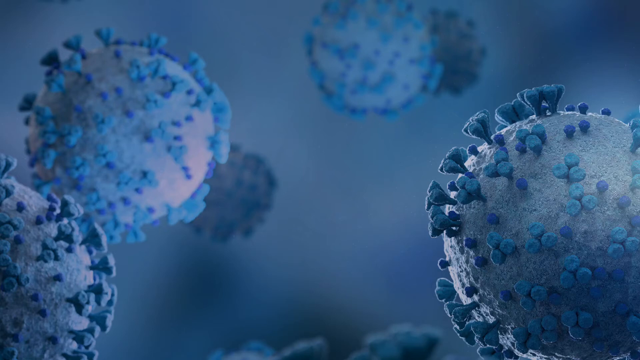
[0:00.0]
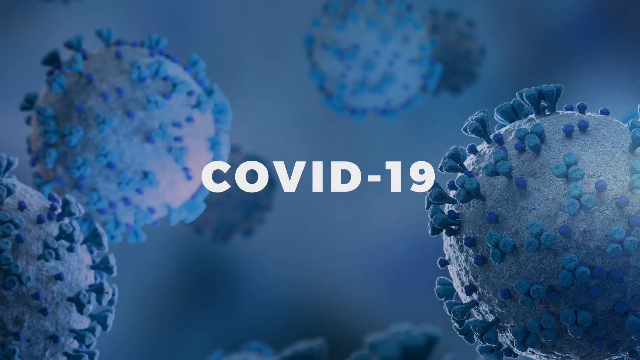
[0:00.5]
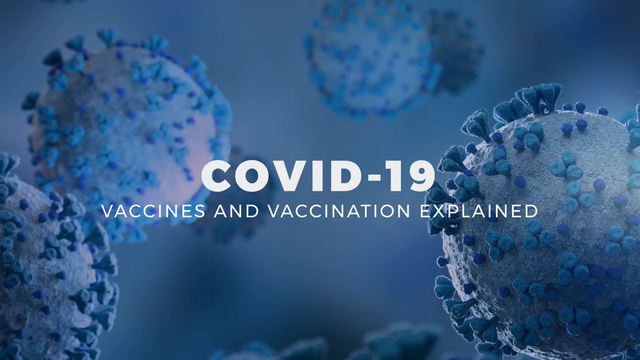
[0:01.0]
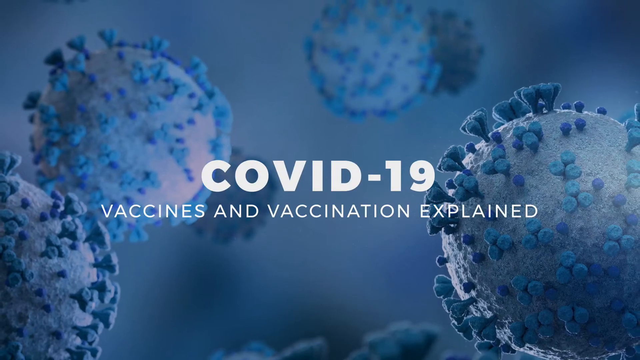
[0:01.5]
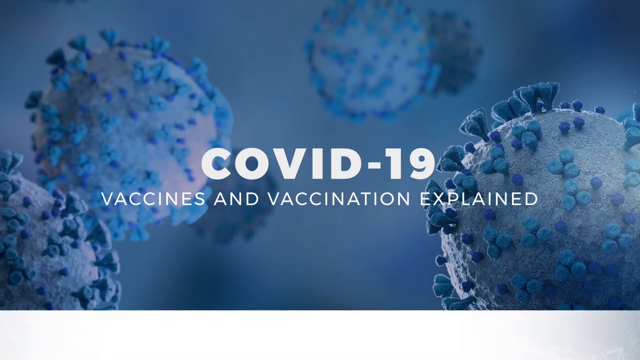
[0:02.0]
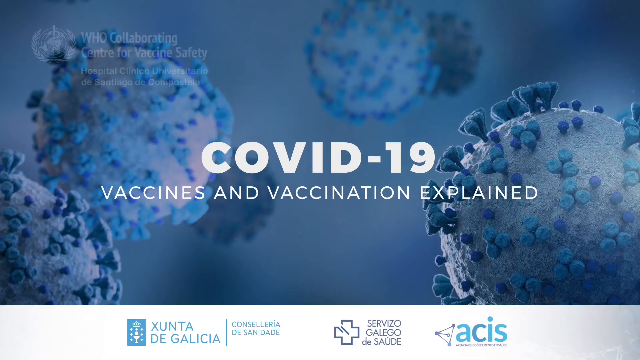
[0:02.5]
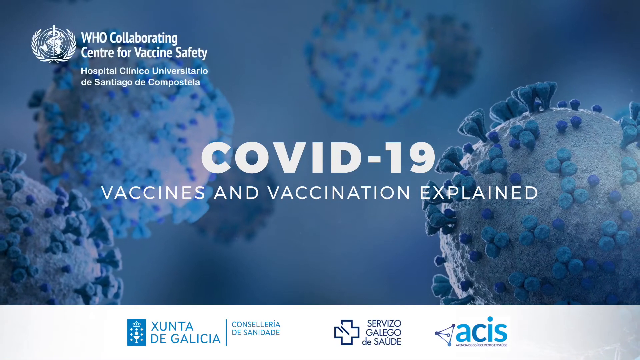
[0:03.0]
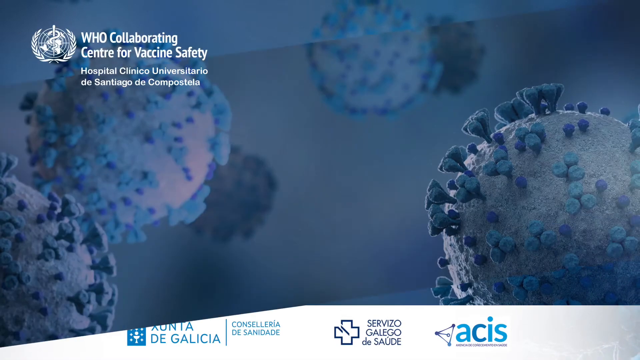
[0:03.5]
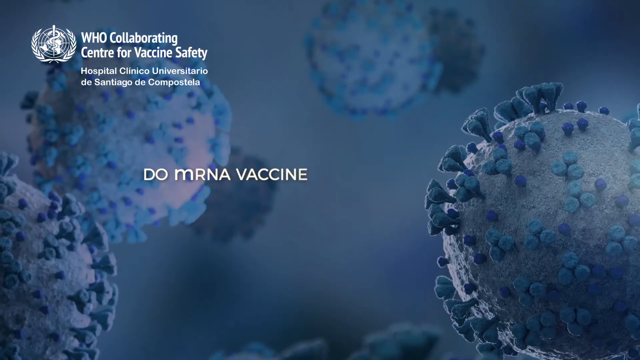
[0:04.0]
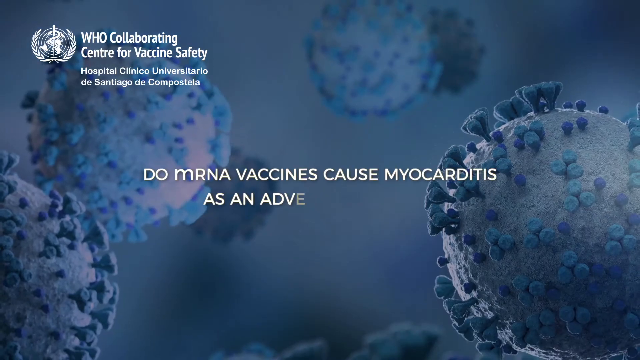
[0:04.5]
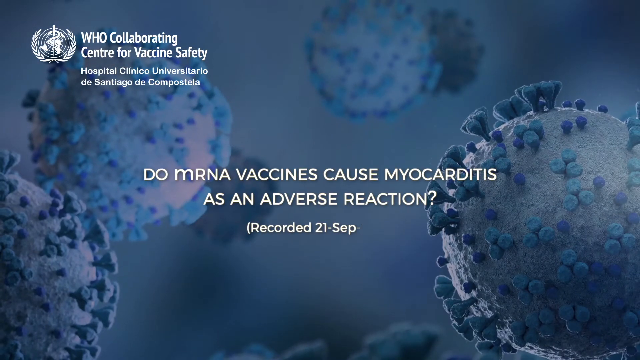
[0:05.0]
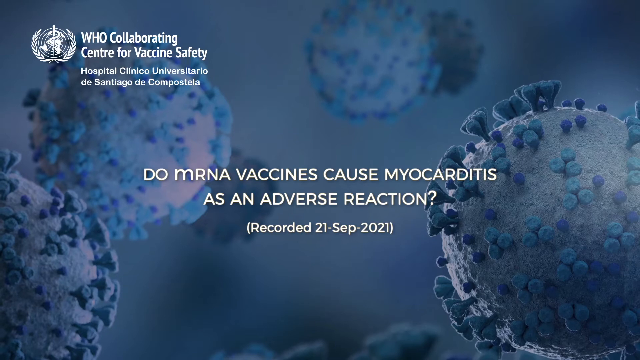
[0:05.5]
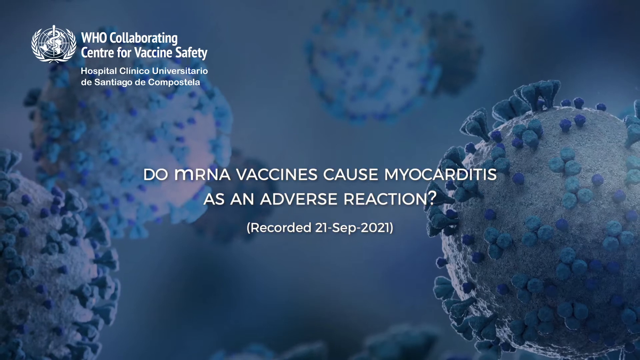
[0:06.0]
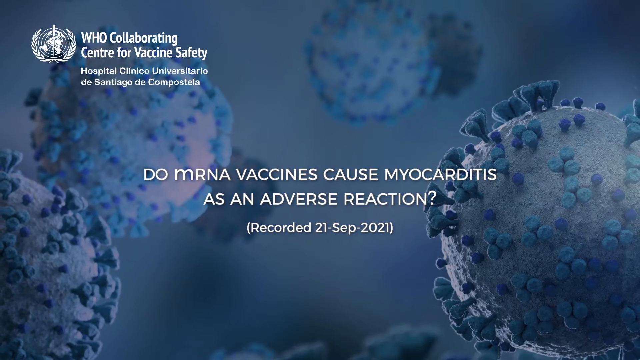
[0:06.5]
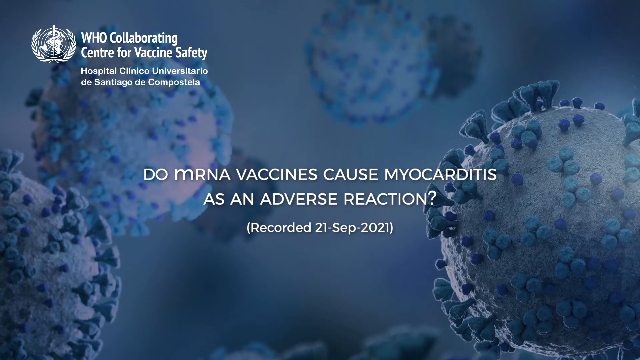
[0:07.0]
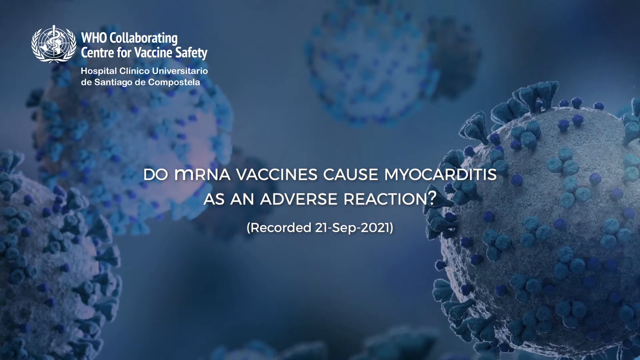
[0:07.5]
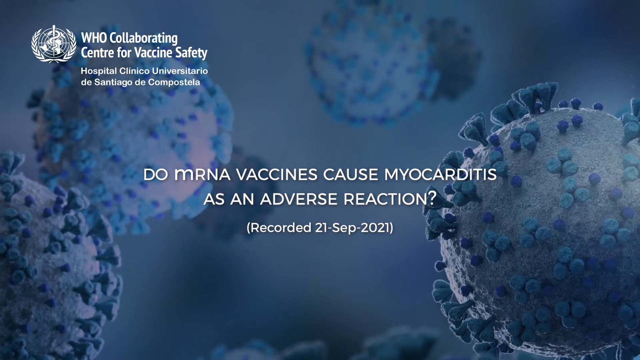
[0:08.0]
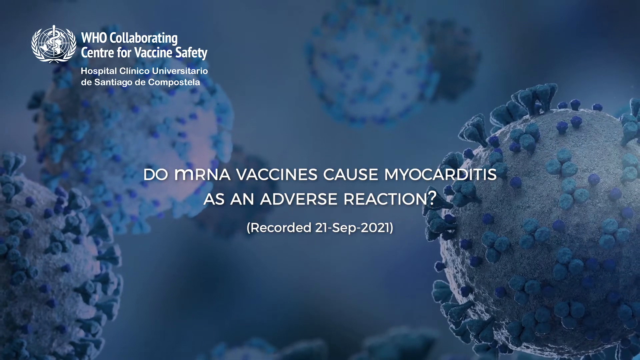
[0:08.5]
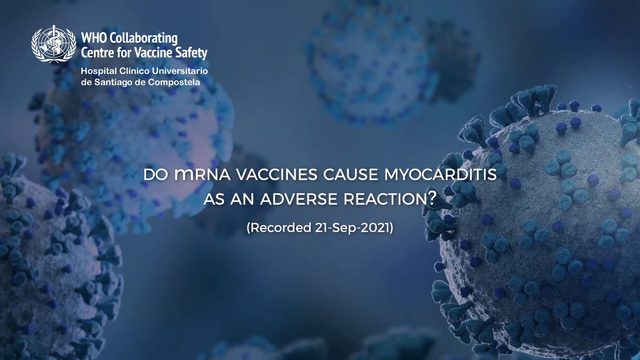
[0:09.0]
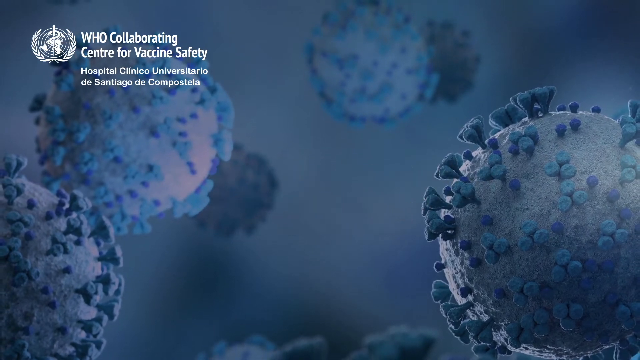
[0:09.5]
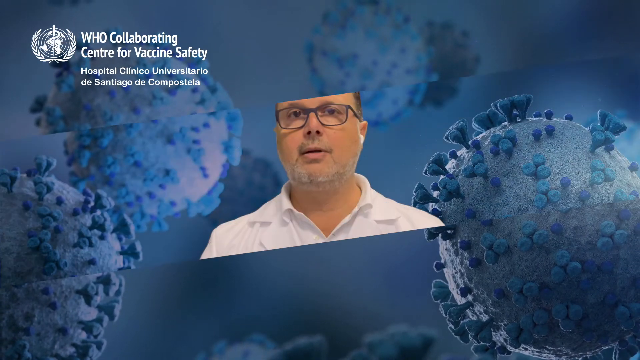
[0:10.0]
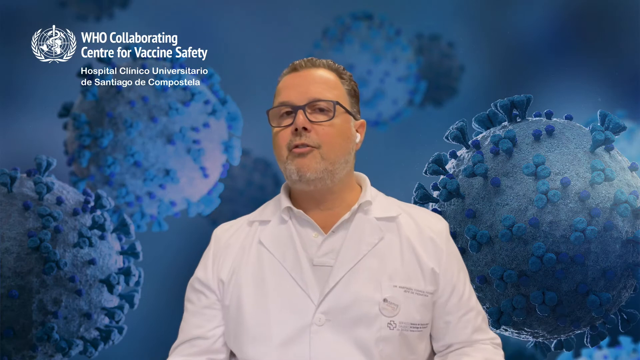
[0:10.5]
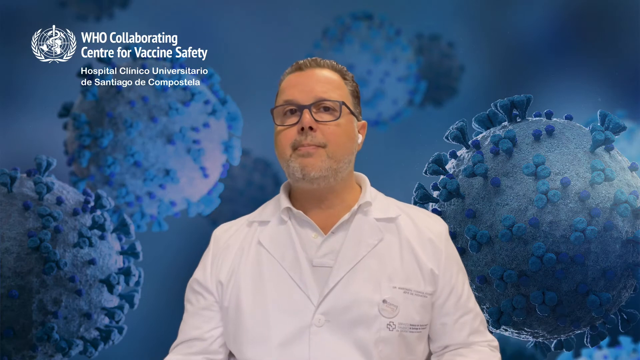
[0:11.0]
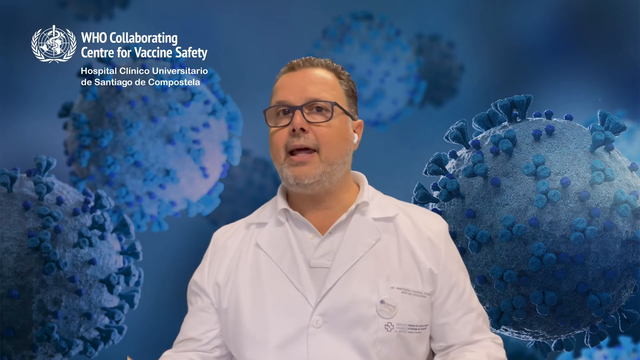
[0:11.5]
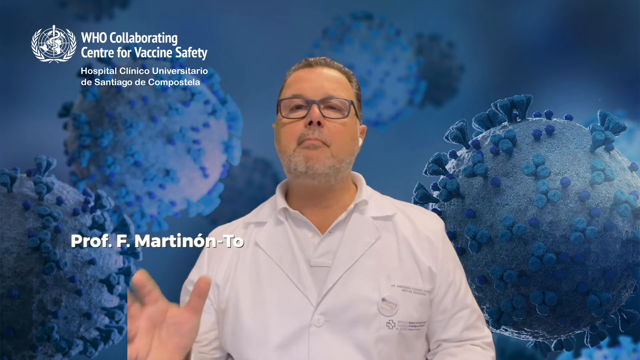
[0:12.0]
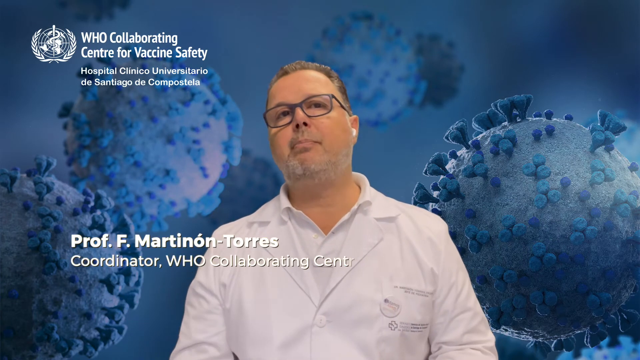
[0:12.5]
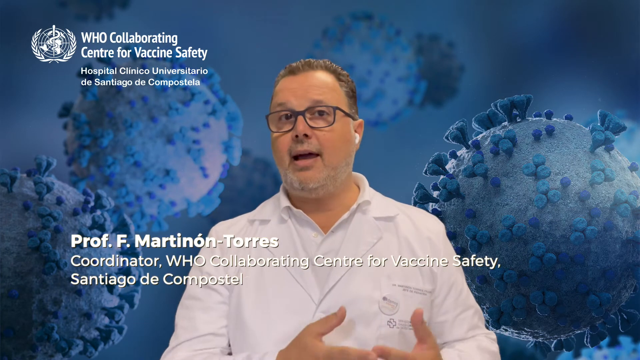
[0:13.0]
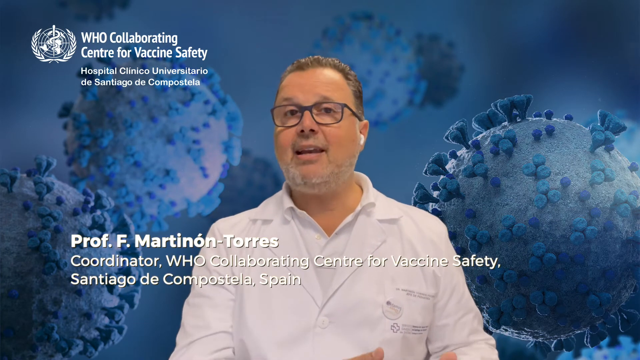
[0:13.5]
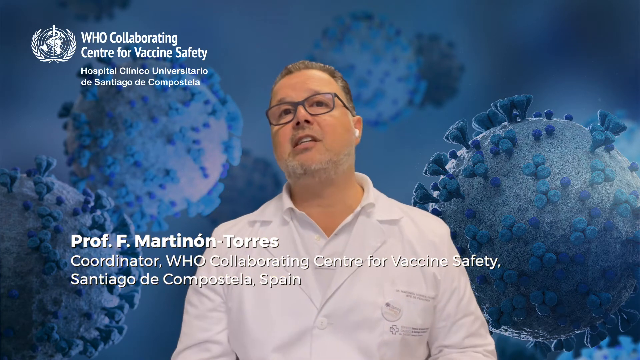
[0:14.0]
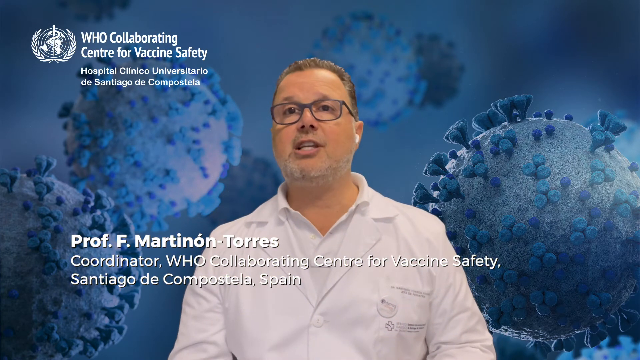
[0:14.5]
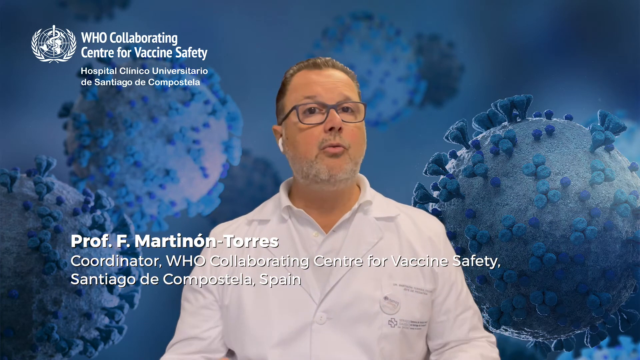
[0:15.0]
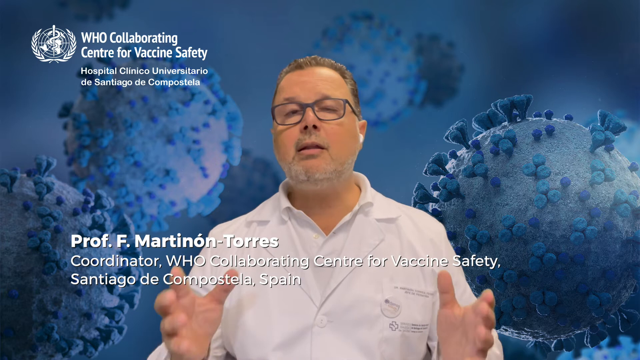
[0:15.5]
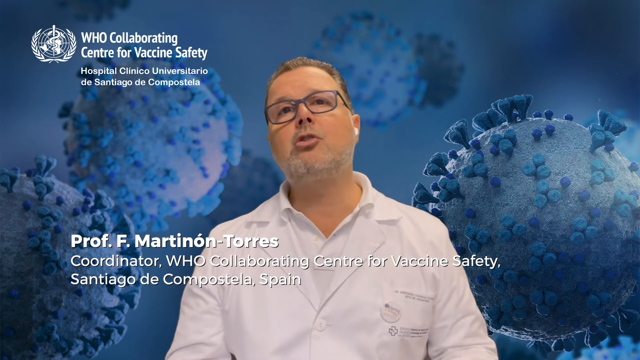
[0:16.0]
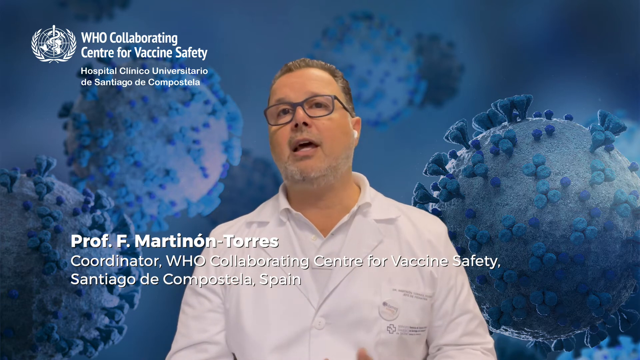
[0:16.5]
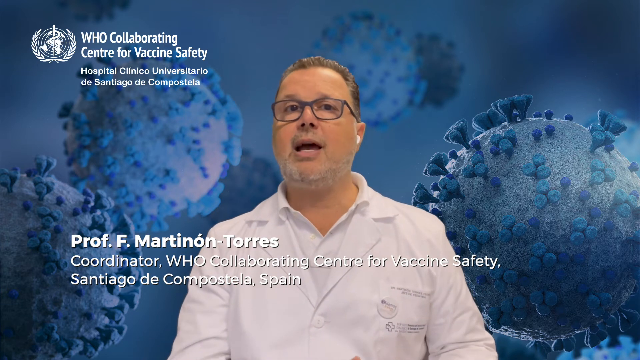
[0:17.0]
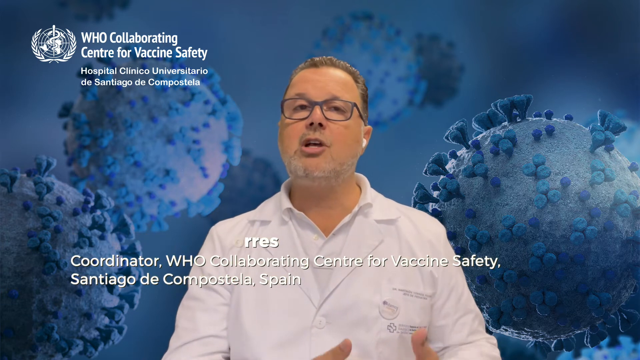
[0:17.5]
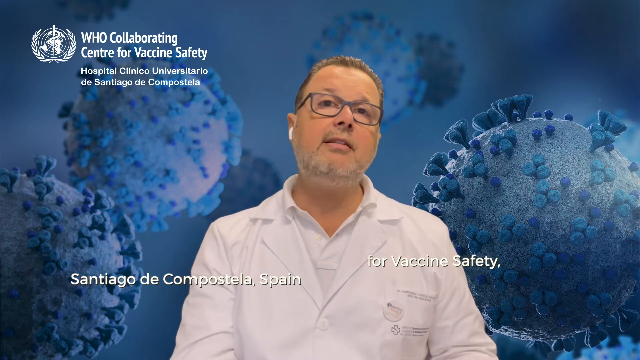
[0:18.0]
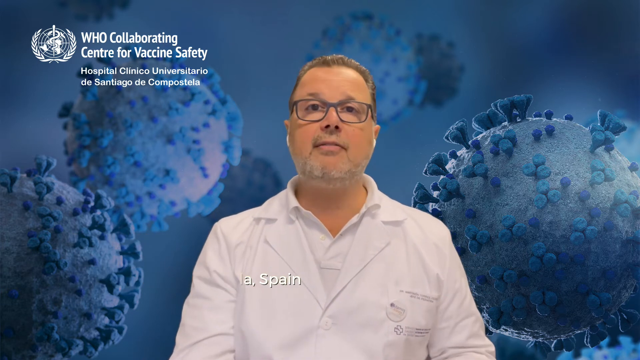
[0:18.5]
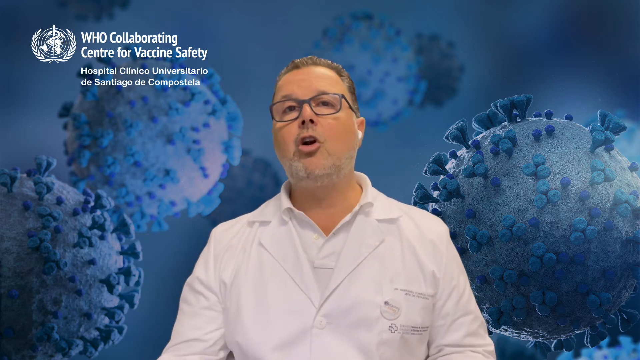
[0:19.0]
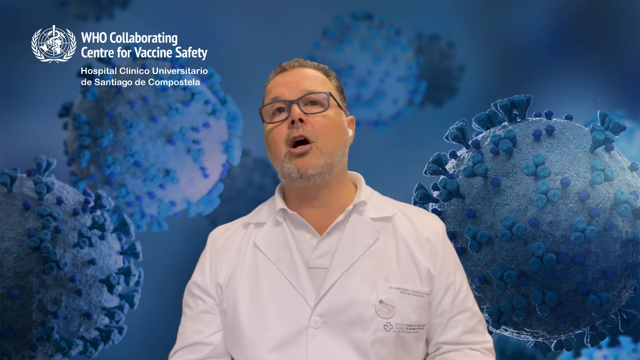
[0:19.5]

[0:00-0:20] The video opens on a blue background with several blue spheres that are supposed to be viruses of some sort; six blue spheres are visible at the start. In the center, white text reads "COVID-19" and below it "VACCINES AND VACCINATION EXPLAINED". A white banner pops up at the bottom with blue text reading "Xunta de Gallerie", "Conselleria de Sanidade", "Servizo Galego" and "ACIS". In the upper left corner, white text reads "WHO Collaborating Center for Vaccine Safety", and beneath it, also in white, "Hospital Clinico Universitario de Santiago de Compostela". The video darkens, and white text in the center asks "do mRNA vaccines cause myocarditis as an adverse reaction?", followed in parentheses by "Recorded 21-SEP-2021". The text disappears and a man appears in the center. He wears a white lab coat or doctor's coat, black glasses and a white earpiece in his left ear, and he faces the viewer while speaking. White text reads "Prof. F. Martinon-Torres", and beneath it, in white, "Coordinator, WHO Collaborating Center for Vaccine Safety, Santiago de Compostela, Spain". The man keeps motioning with his hands toward the viewer as he speaks.